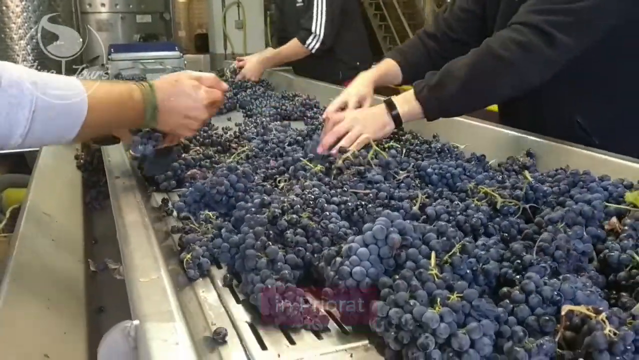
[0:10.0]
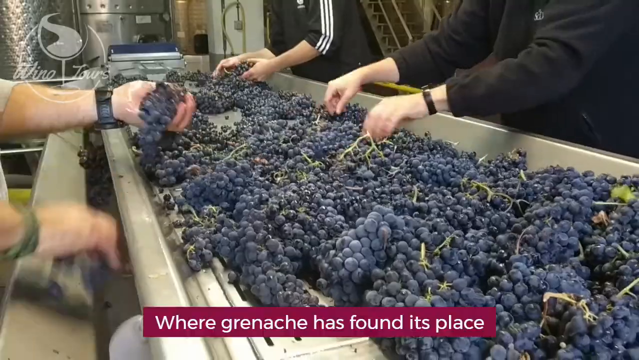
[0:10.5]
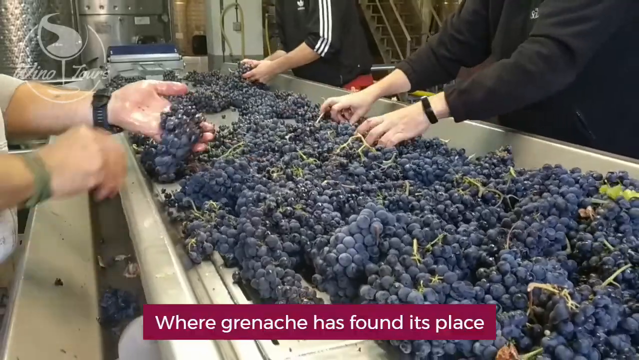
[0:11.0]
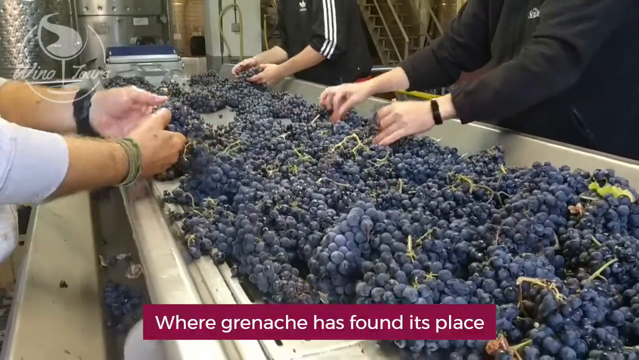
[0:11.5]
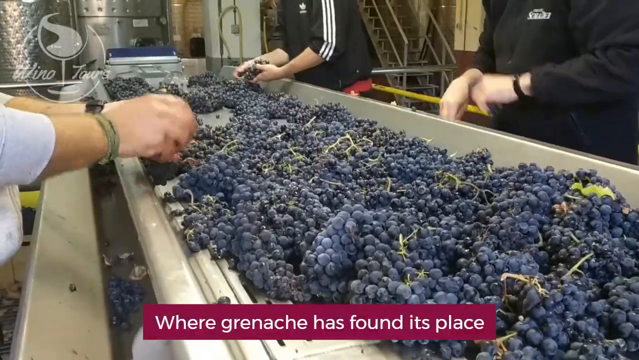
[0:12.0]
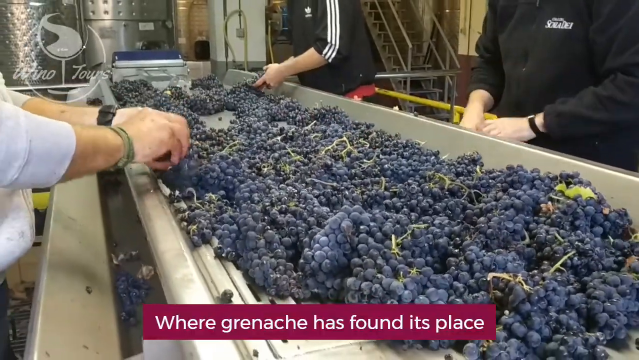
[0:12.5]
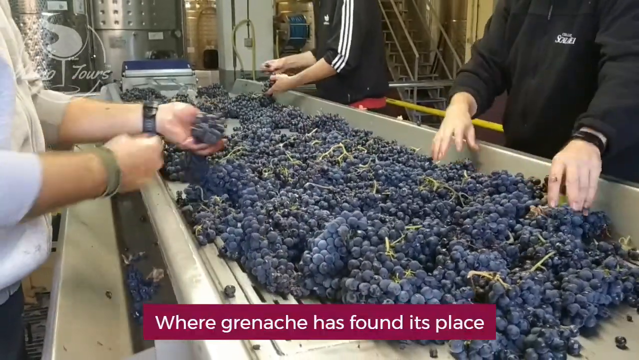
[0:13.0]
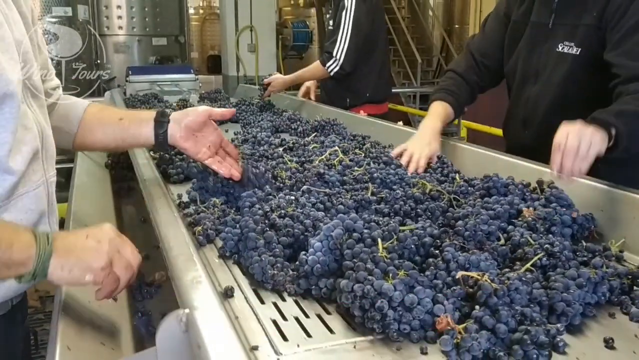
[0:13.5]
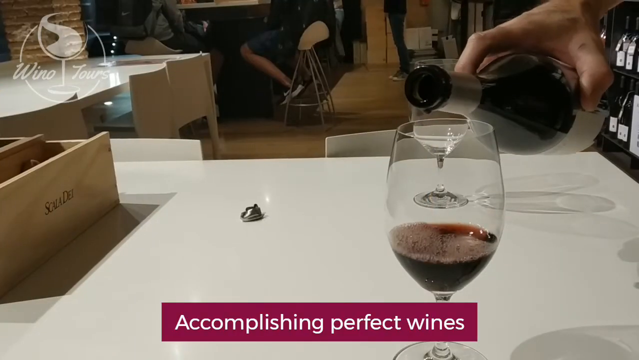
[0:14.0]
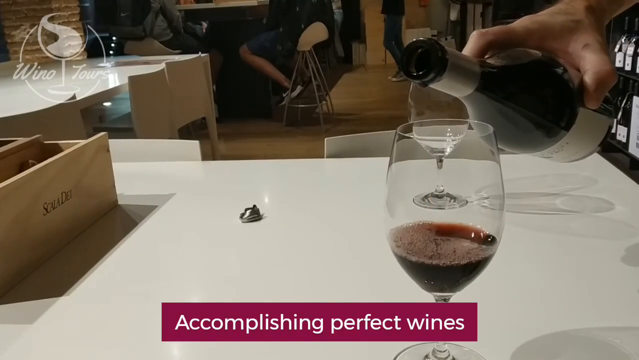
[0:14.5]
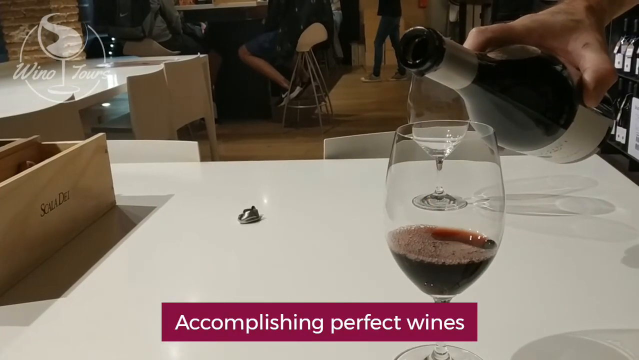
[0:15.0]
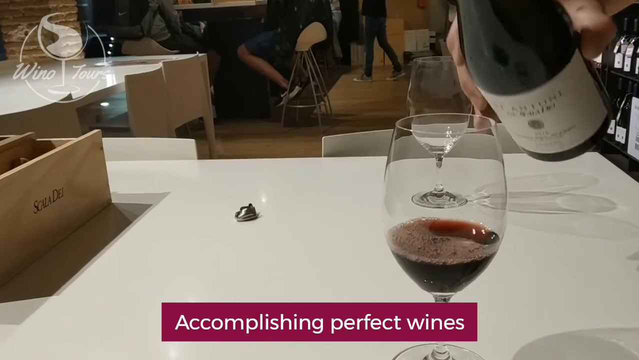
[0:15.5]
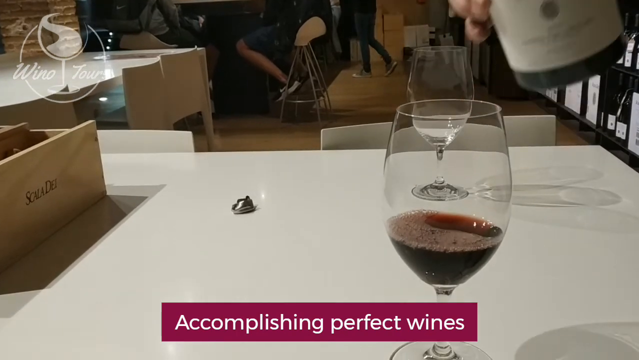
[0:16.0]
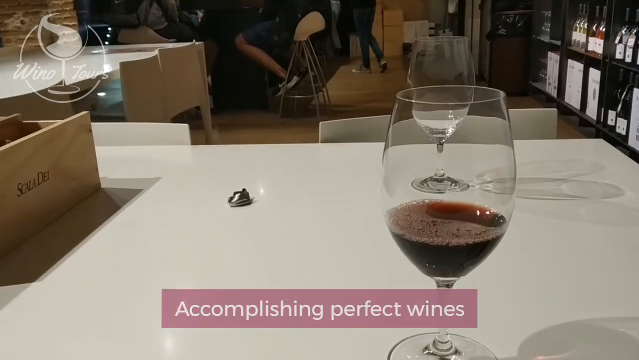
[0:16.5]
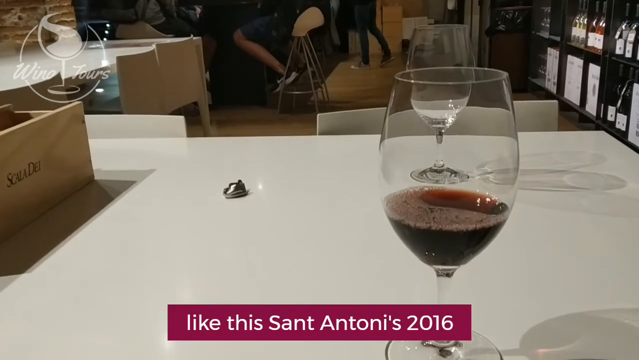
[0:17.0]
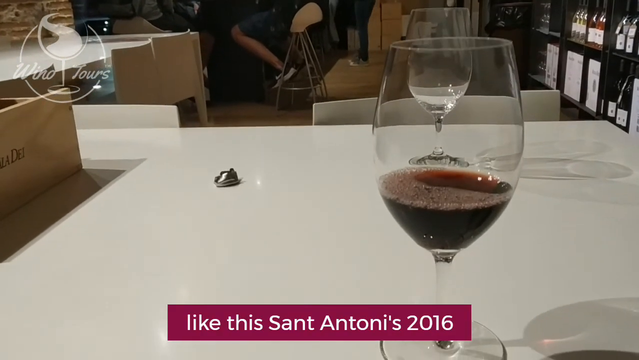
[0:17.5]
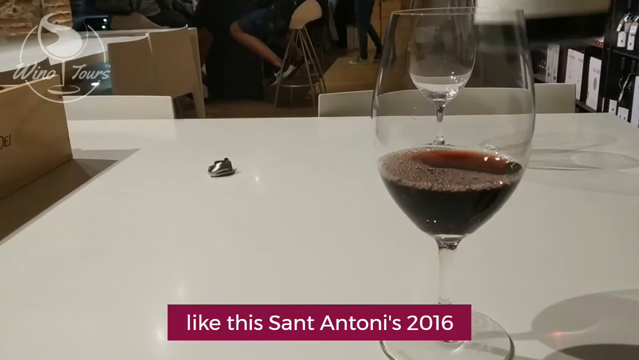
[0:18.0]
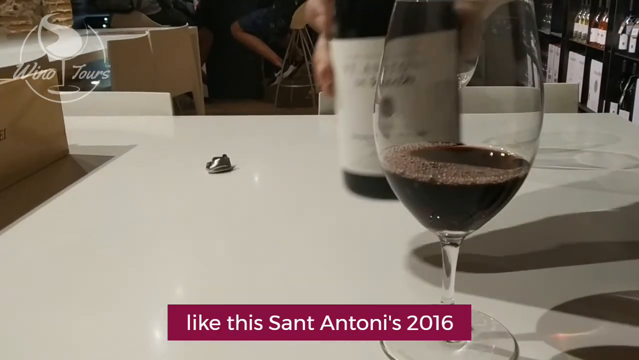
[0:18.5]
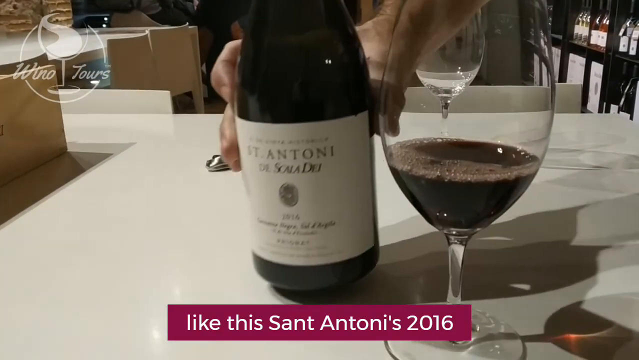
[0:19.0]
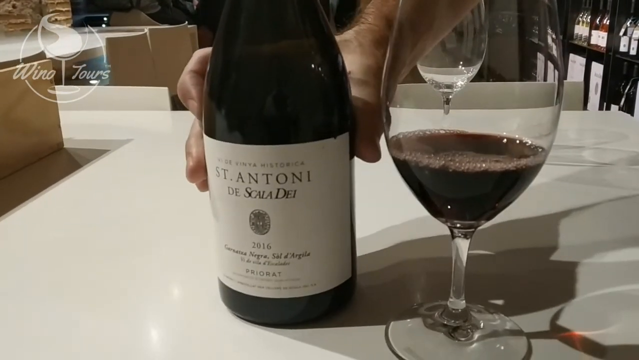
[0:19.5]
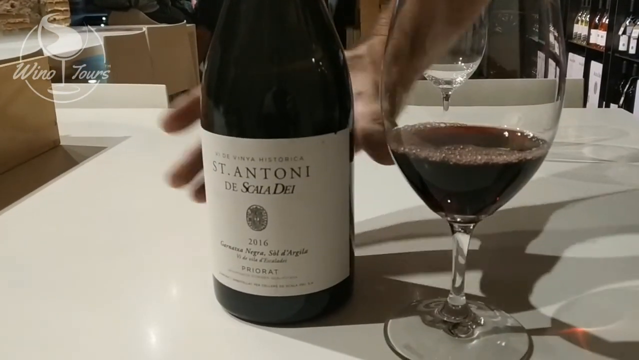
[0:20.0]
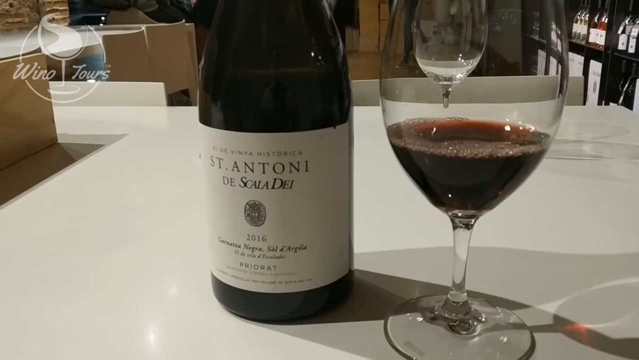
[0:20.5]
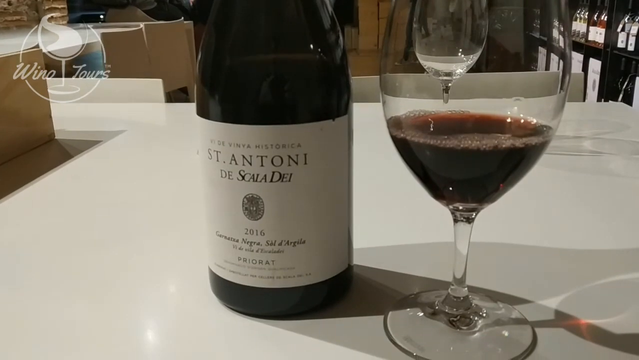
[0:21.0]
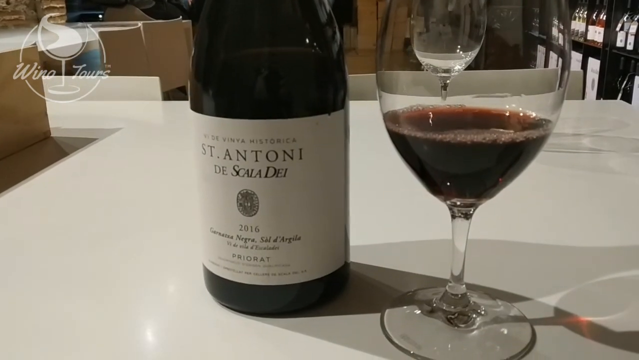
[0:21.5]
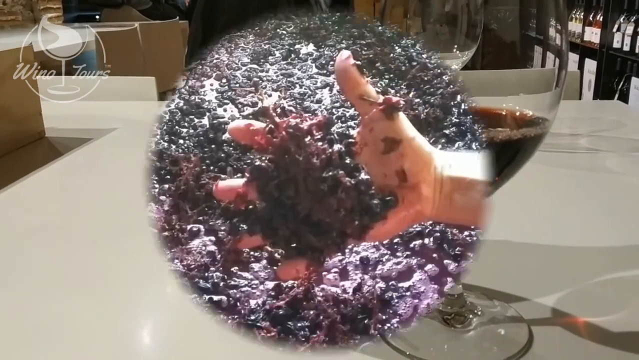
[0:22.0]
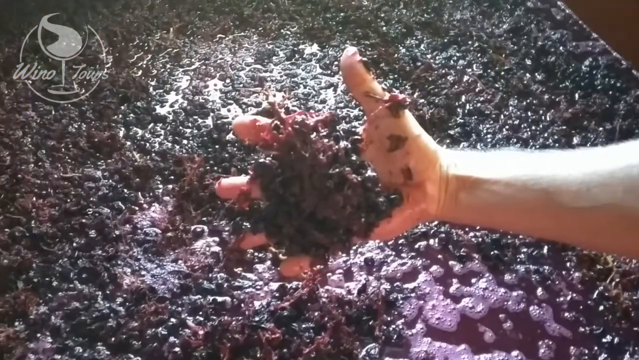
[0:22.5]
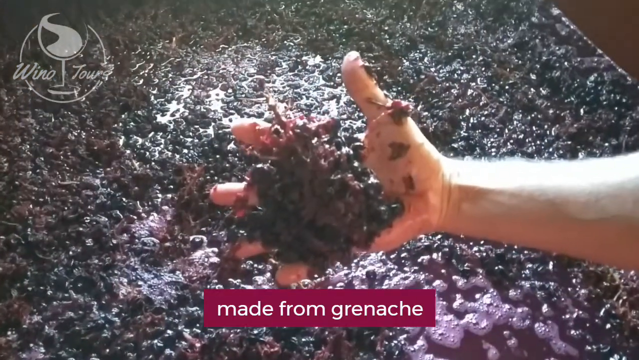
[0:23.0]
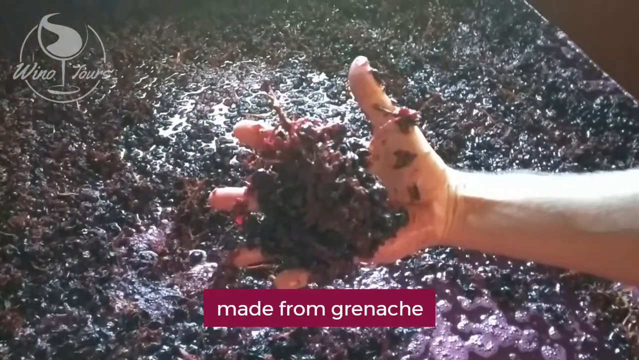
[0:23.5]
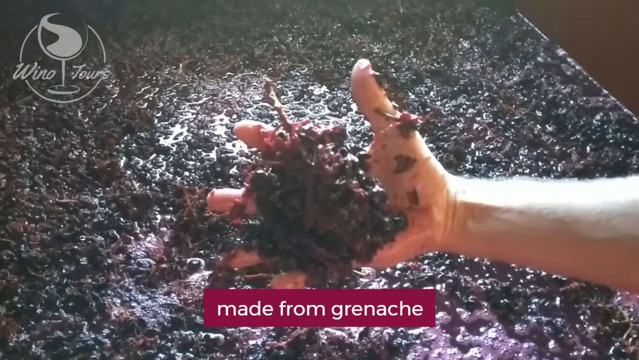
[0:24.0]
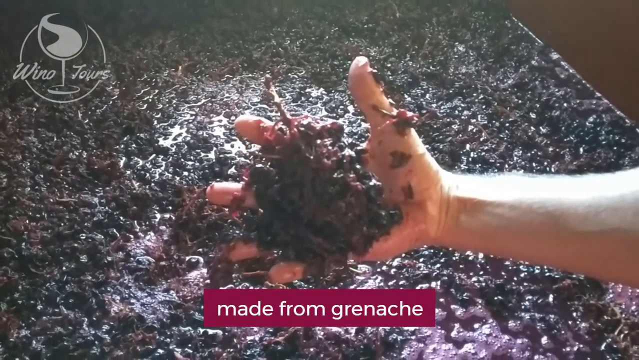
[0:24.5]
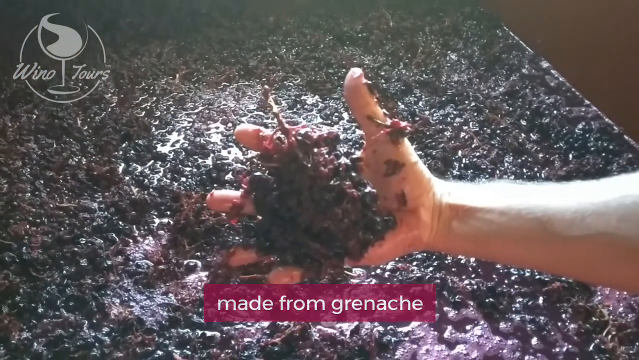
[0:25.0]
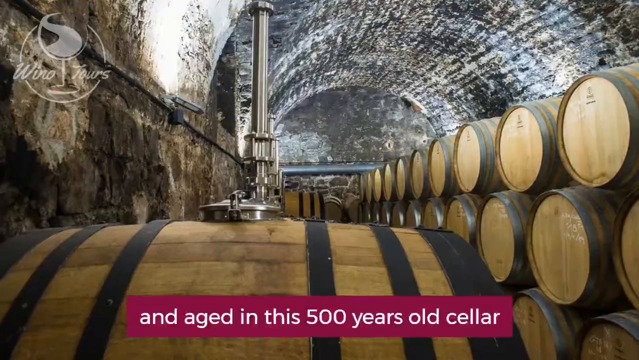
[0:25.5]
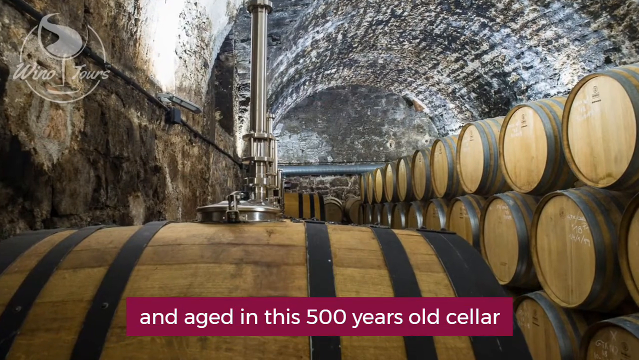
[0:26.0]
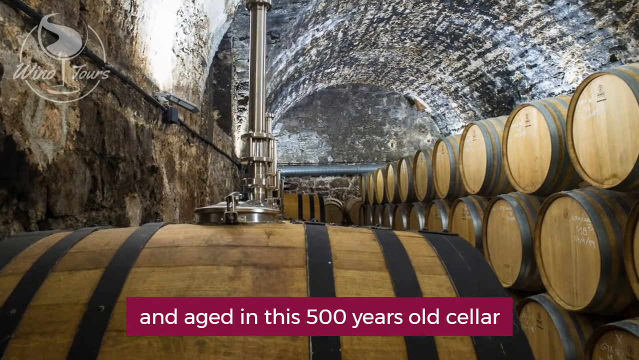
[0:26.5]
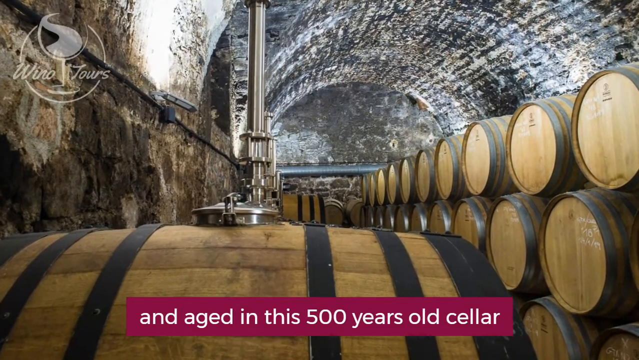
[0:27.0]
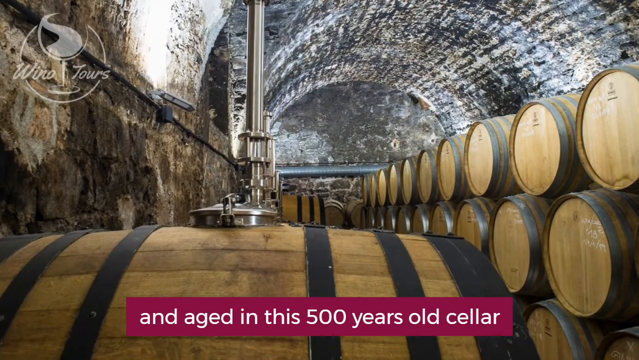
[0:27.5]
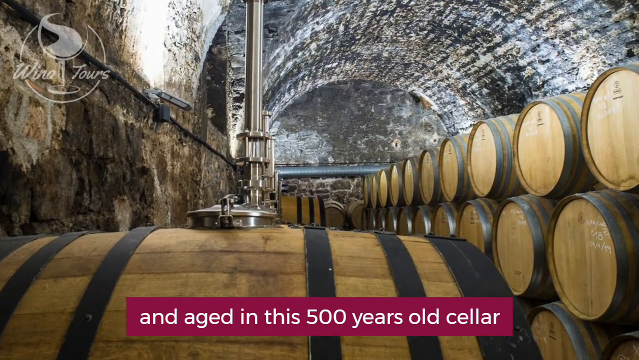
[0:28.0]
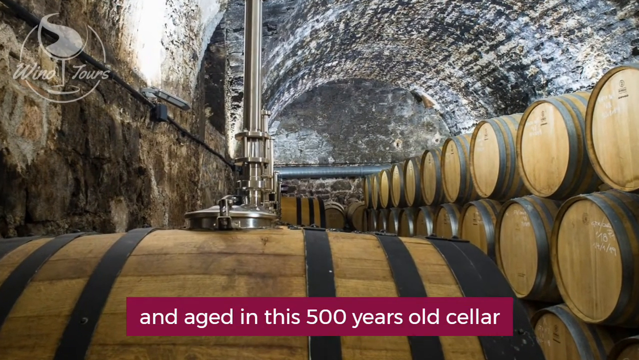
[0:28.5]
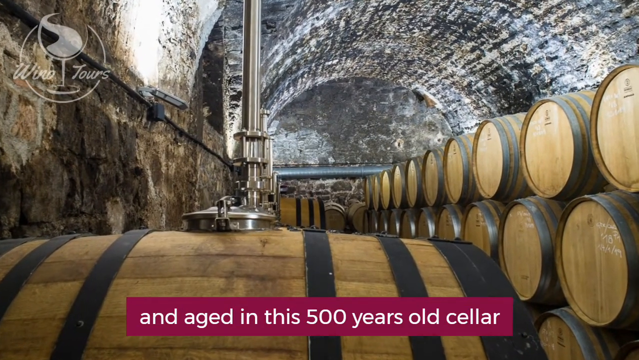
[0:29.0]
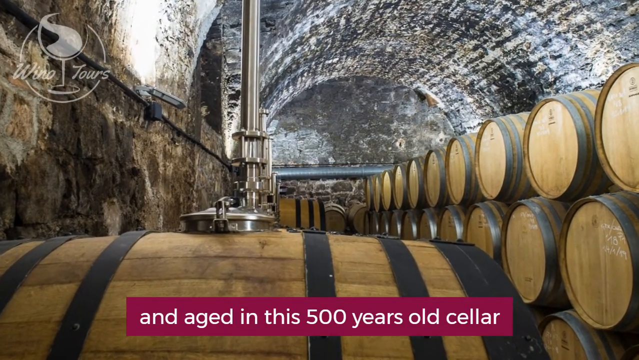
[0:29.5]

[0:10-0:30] The hands continue sorting through bunches of grapes on the conveyor belt. The view then moves to someone pouring wine into a glass on a white tabletop. Off to the side is a wooden box that appears to be labeled "Scala Dei". A text box at the bottom, white text on a maroon background, says "Accomplishing perfect wines". The person places the bottle next to the glass so the label can be read: a white label with black text that says "St. Anthony de Scala Dei", with an emblem and the year 2016, plus what looks like Italian writing that is indistinct because of the video quality. A special effect follows: the image of the wine glass and bottle is replaced by an expanding circle showing grapes that look mashed and juicy, and a human hand holds a clump of smashed grapes up to the camera. White text on a maroon background says "Made from Grenache". The image jumps to a different view, apparently inside a long barrel-vaulted room with a curved, arched ceiling and many, many wooden barrels, presumably wine barrels, as the text at the bottom says "And aged in this 500 years old cellar". The camera zooms in a little on this still image.